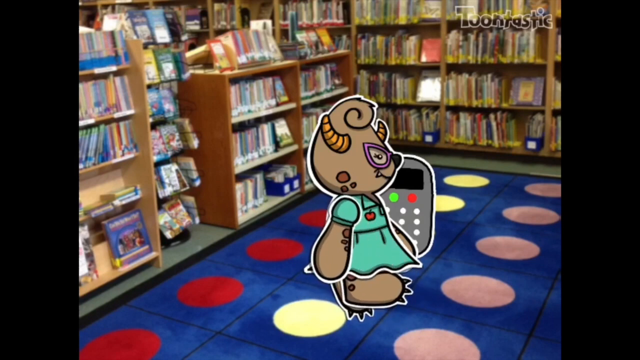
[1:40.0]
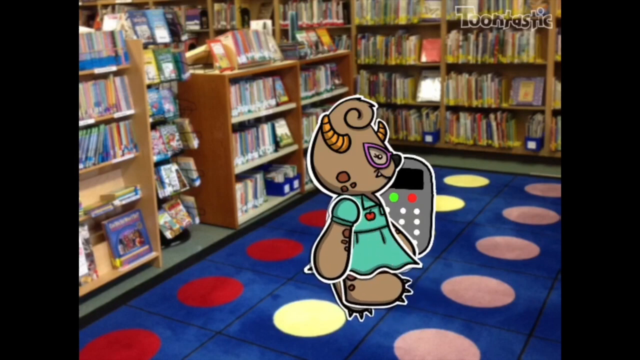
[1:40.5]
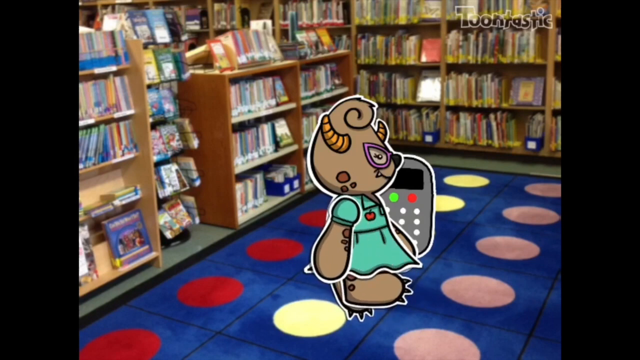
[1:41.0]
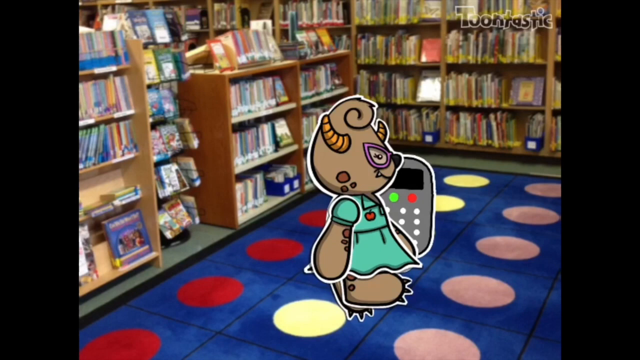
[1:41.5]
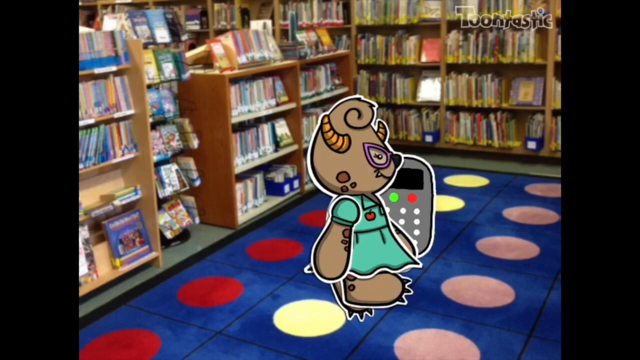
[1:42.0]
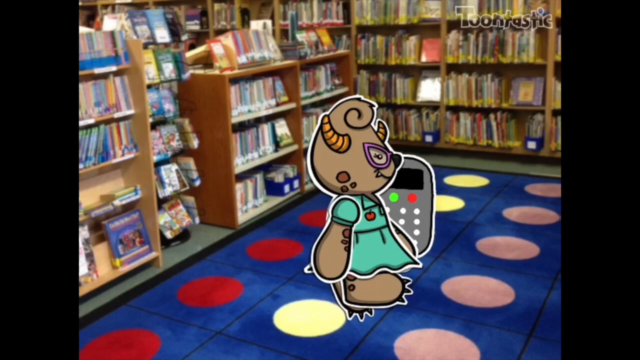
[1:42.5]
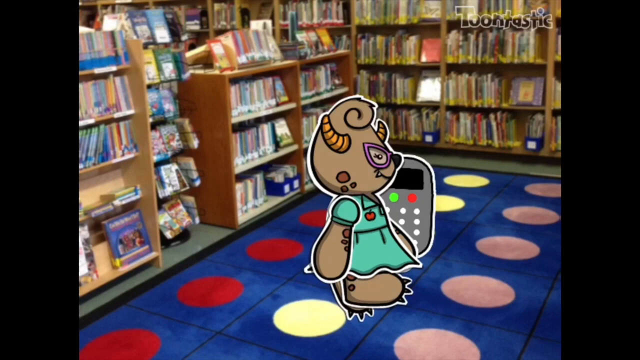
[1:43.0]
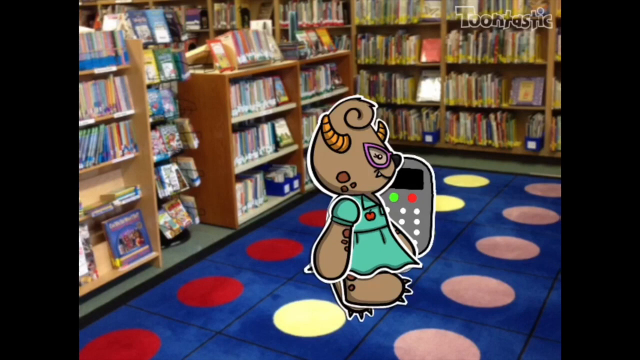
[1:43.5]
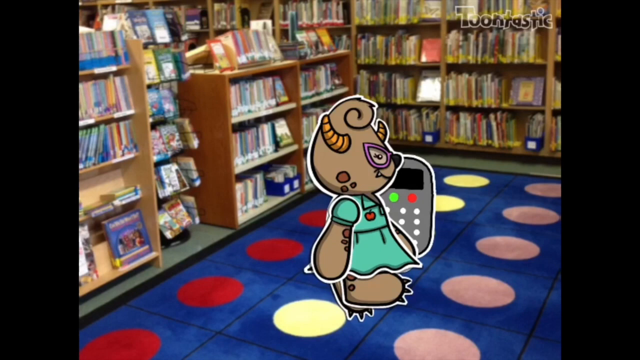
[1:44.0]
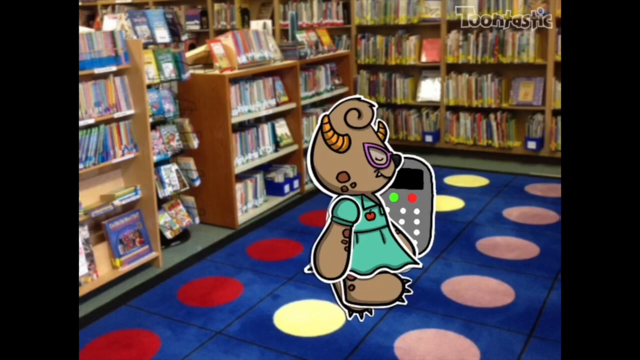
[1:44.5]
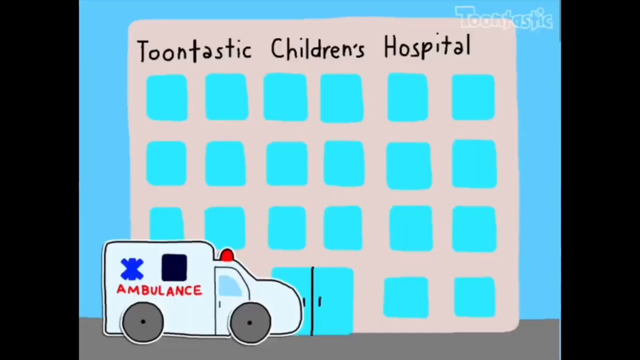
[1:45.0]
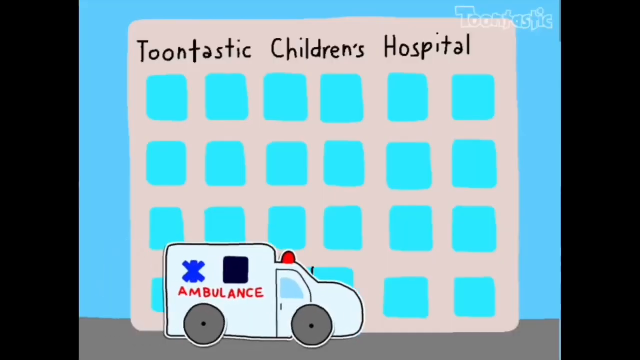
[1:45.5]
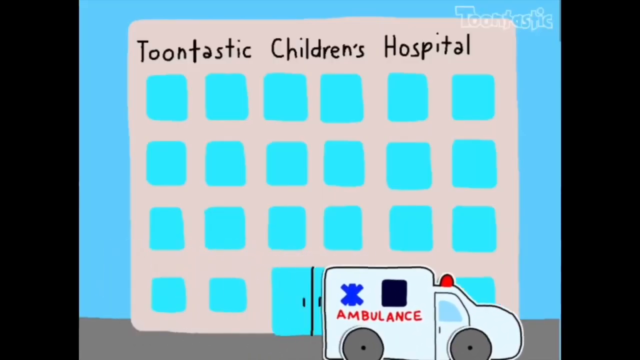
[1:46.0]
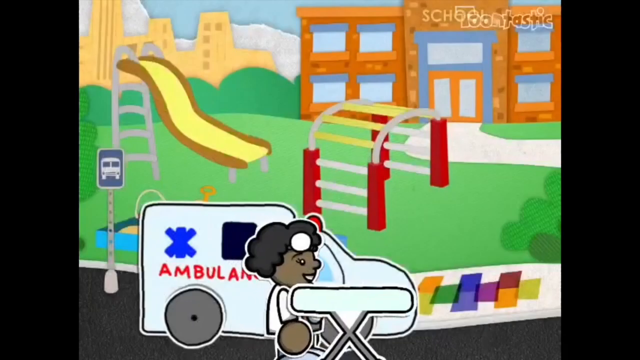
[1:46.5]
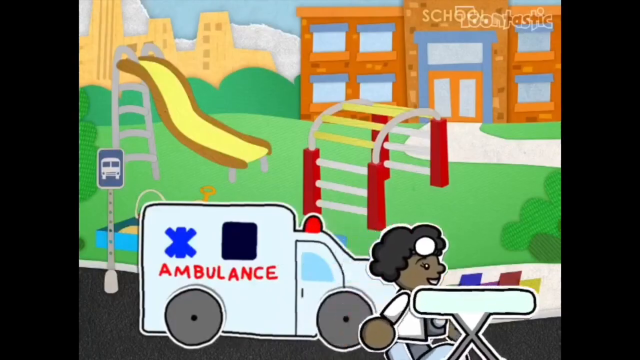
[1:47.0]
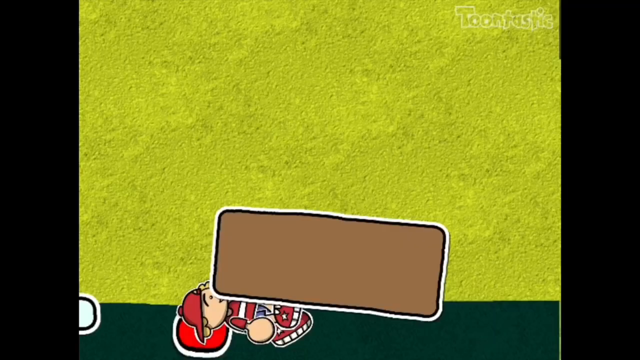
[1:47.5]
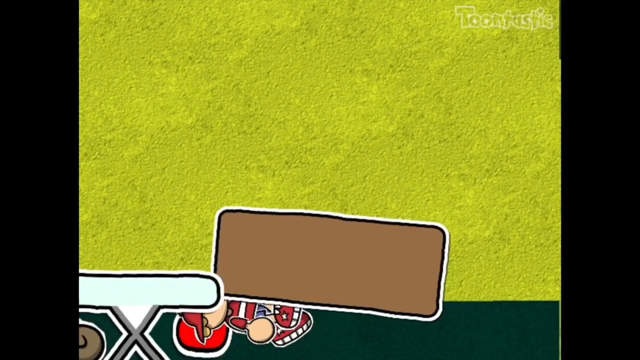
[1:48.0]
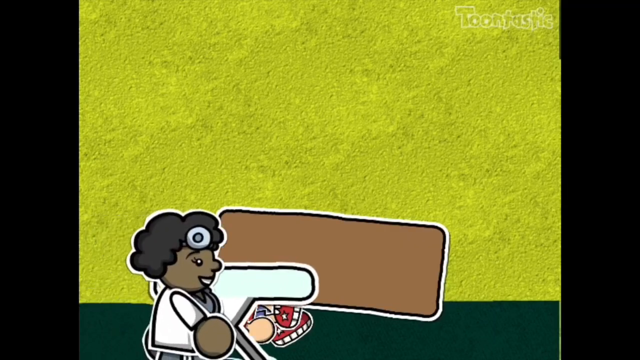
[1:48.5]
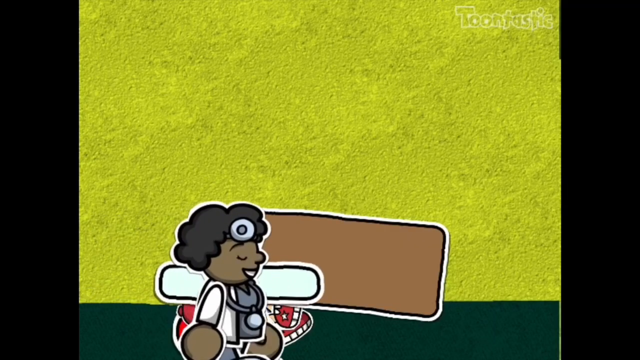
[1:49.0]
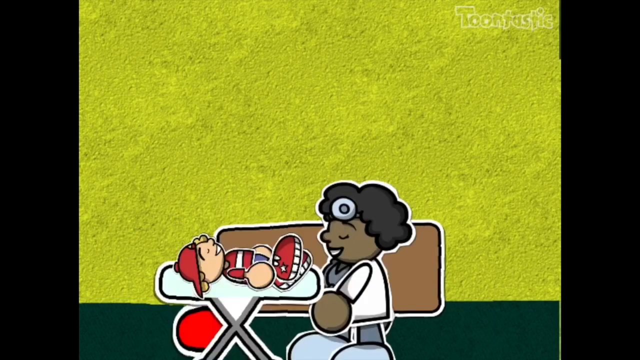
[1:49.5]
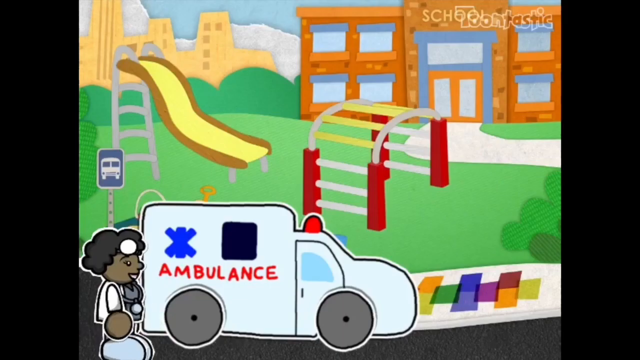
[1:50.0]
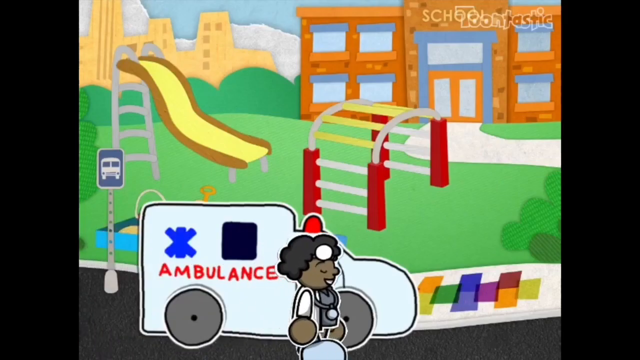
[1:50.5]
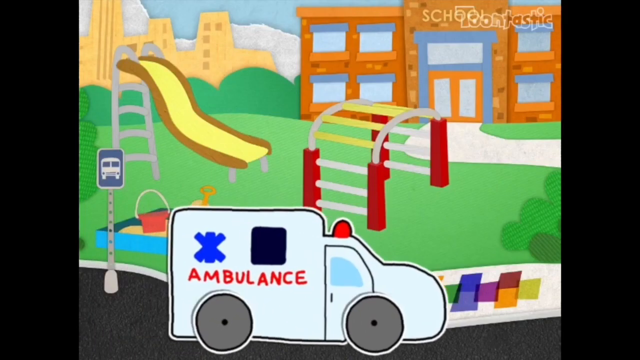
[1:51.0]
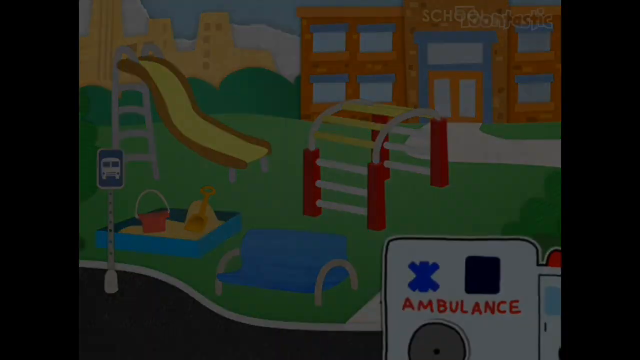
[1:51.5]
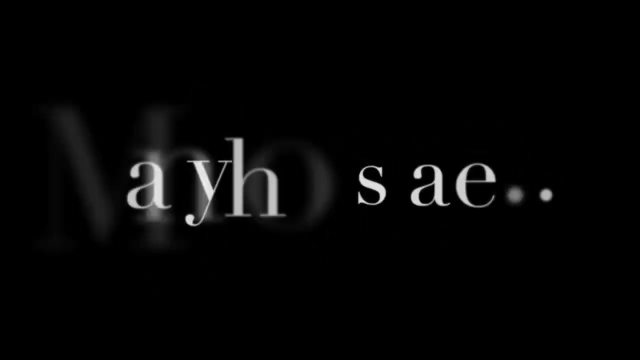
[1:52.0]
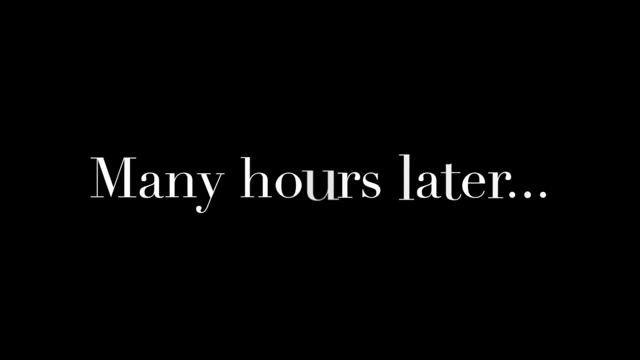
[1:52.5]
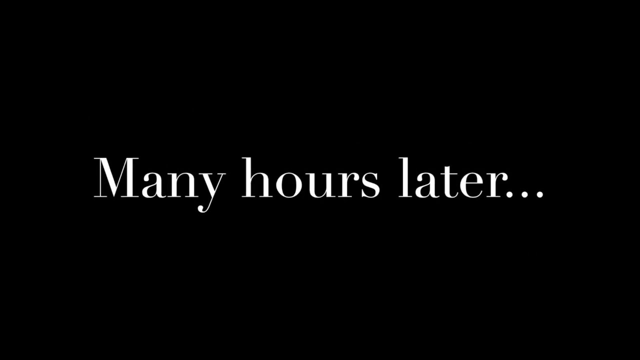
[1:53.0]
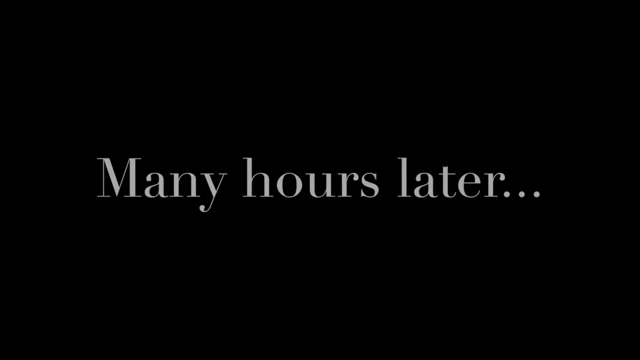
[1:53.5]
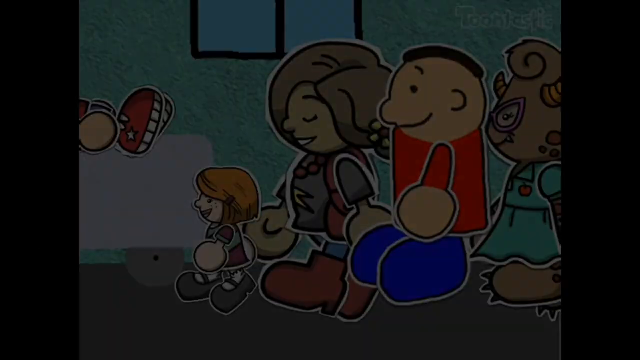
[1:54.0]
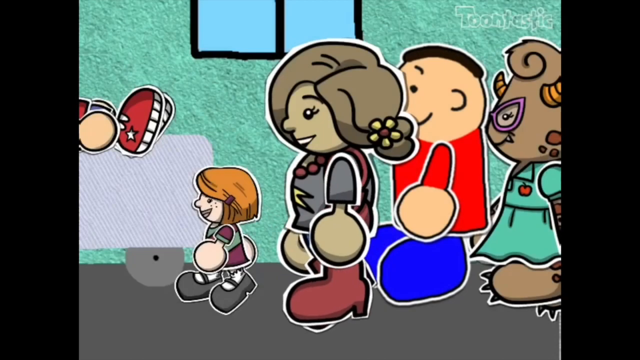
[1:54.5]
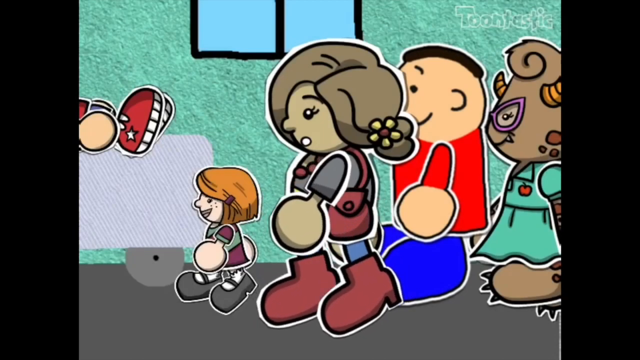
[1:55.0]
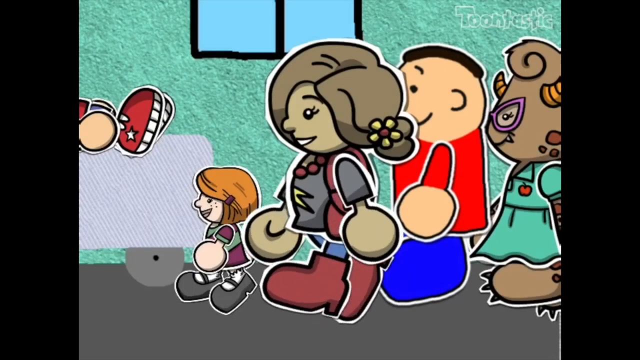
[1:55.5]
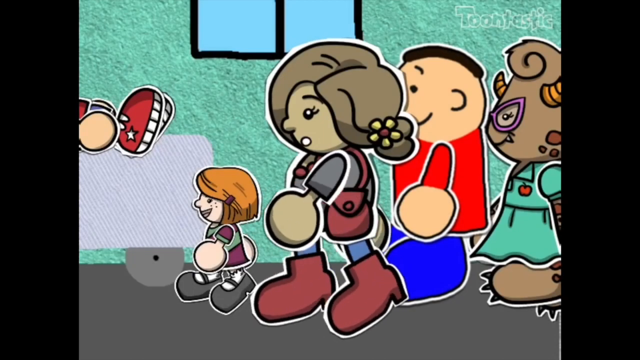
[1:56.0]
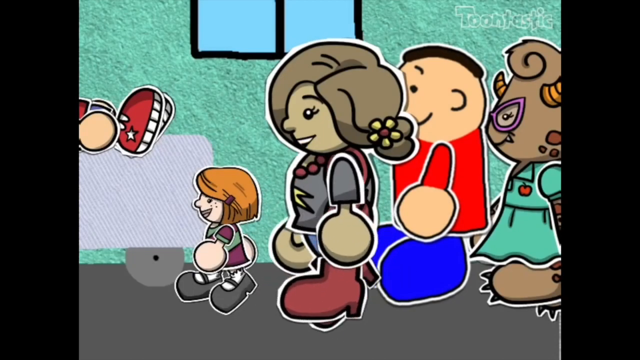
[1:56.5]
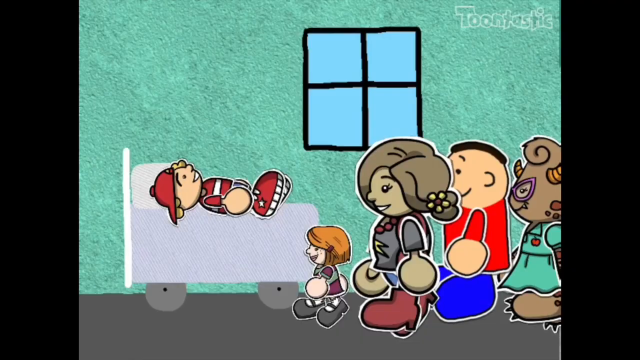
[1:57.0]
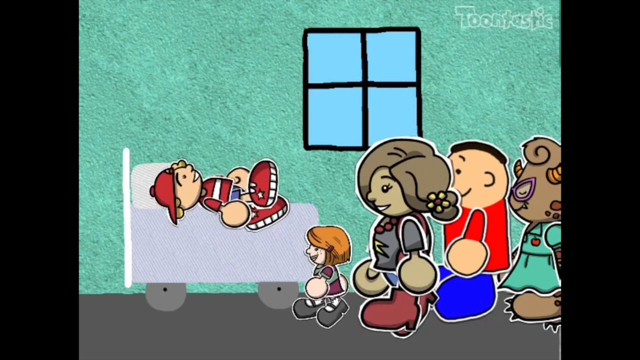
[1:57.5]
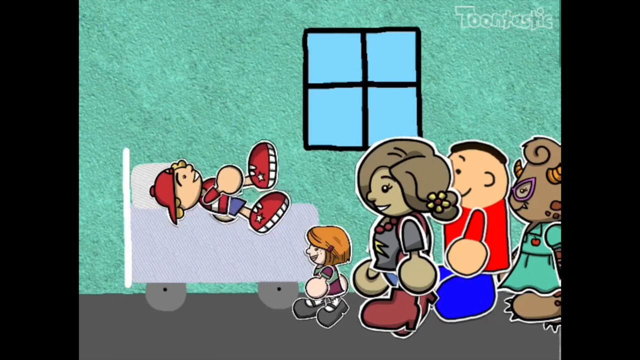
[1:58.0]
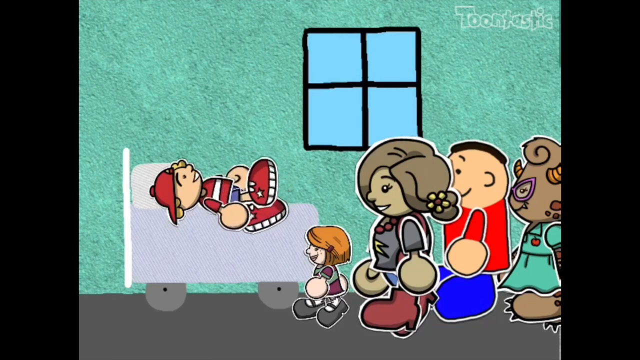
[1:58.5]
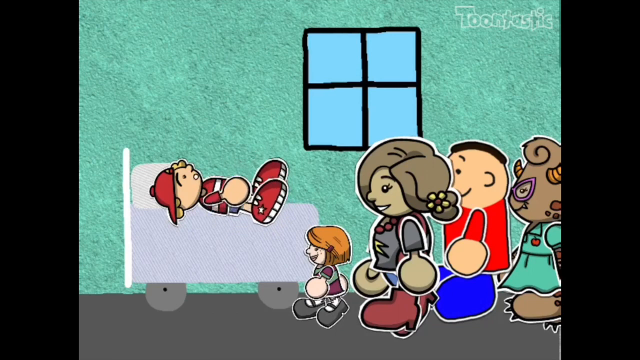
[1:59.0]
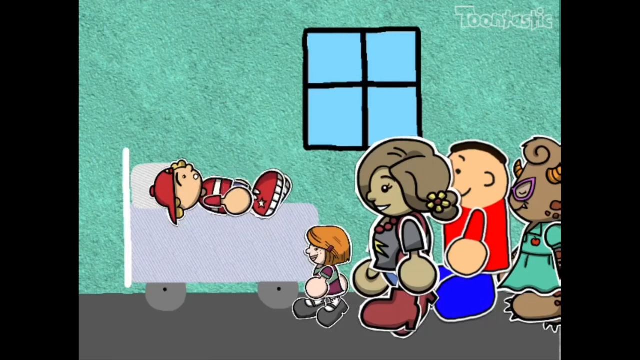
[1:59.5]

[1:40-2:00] The elephant-headed girl in the library calls for help, and immediately afterward an ambulance arrives. Doctors come with a stretcher, carry the boy and take him away in the ambulance. Hours later, the boy is in Nonstacks Children's Hospital, where friends, three girls and a boy, visit him. The boy seems alright, communicating freely with his friends. Text reads "For more information, visit www.FEMA.gov".